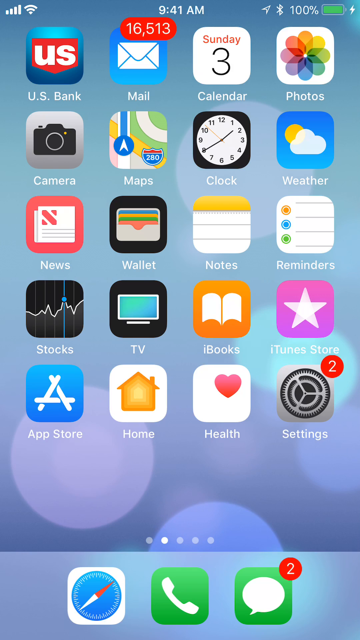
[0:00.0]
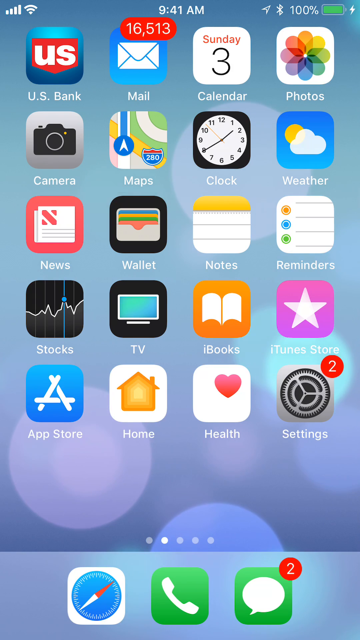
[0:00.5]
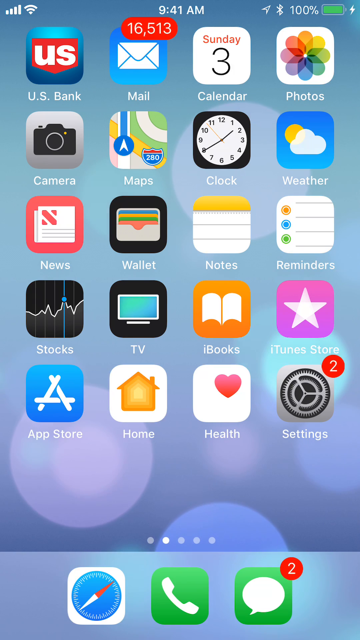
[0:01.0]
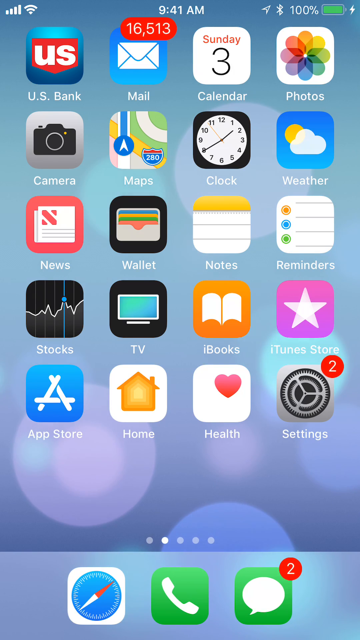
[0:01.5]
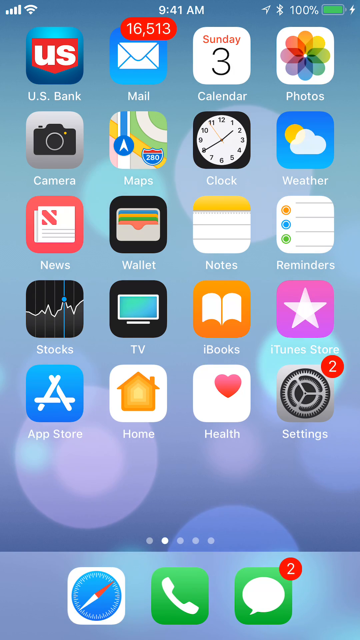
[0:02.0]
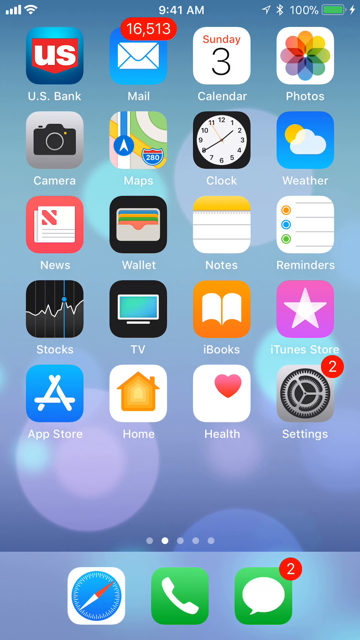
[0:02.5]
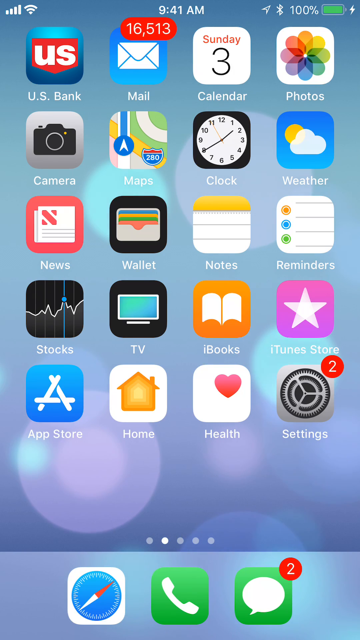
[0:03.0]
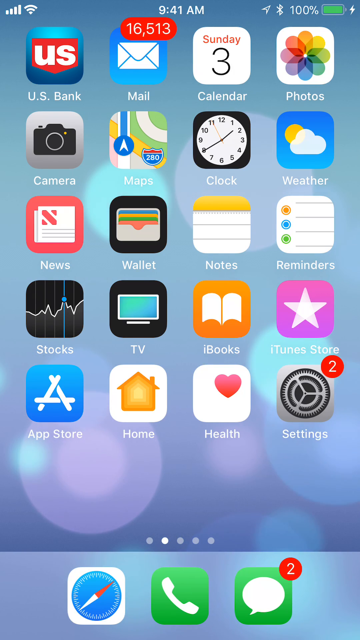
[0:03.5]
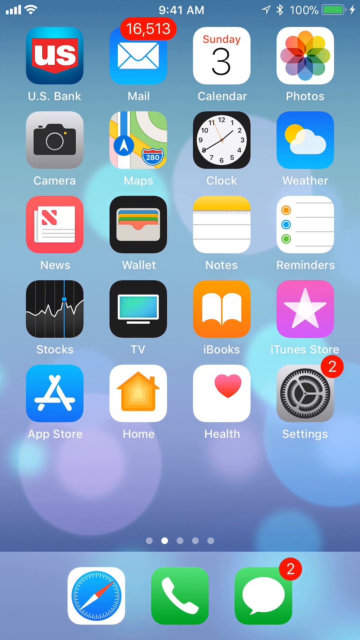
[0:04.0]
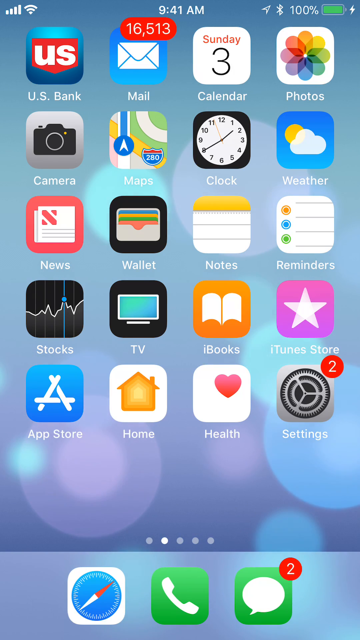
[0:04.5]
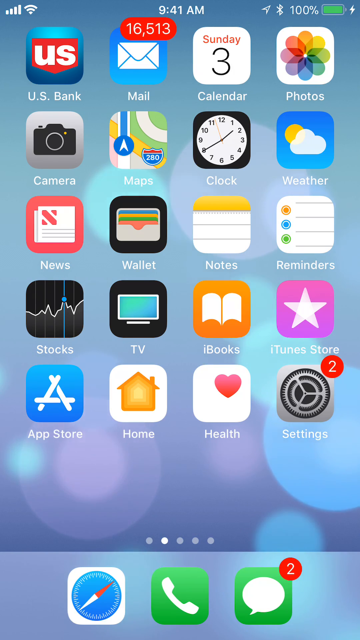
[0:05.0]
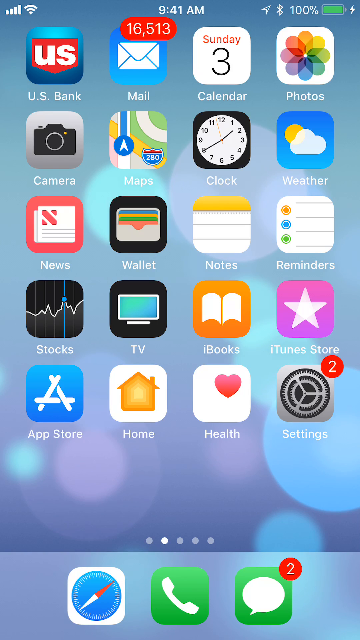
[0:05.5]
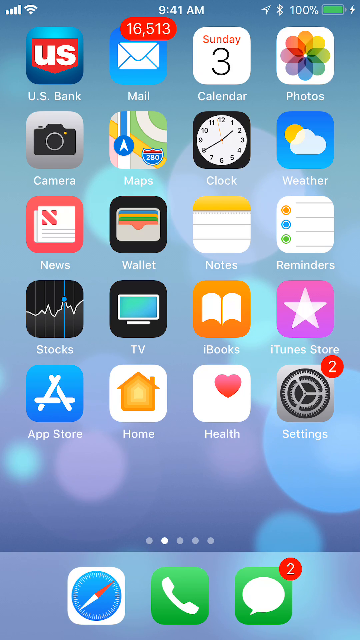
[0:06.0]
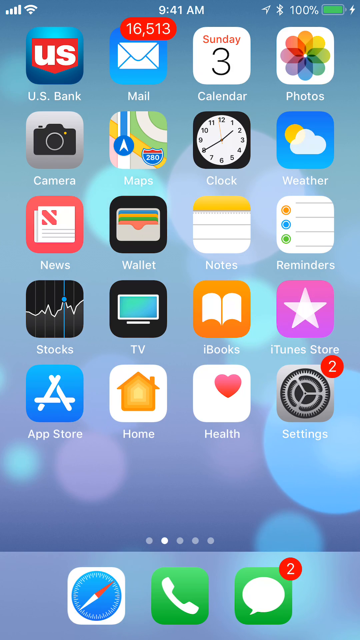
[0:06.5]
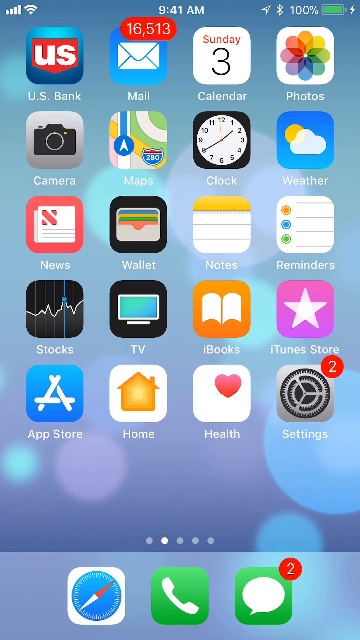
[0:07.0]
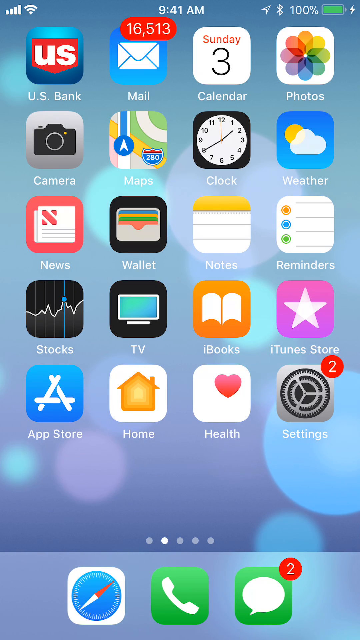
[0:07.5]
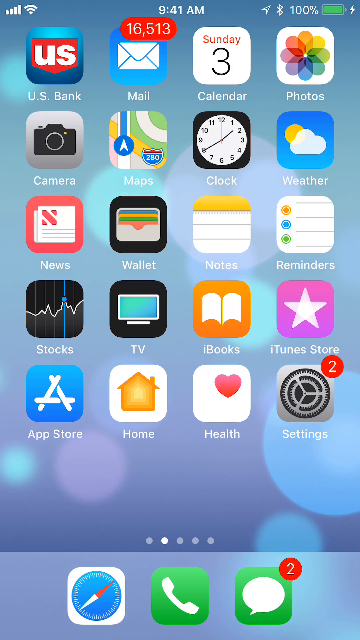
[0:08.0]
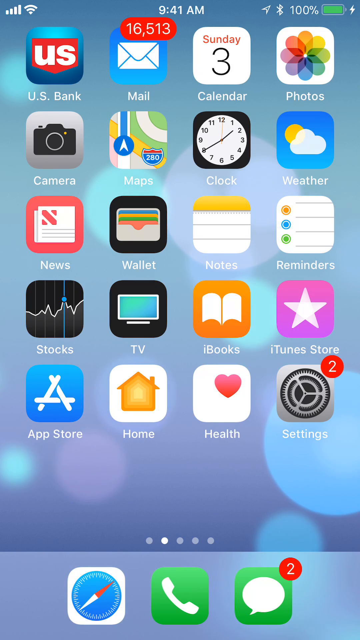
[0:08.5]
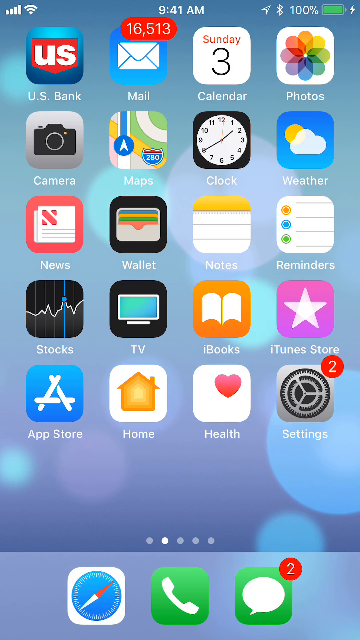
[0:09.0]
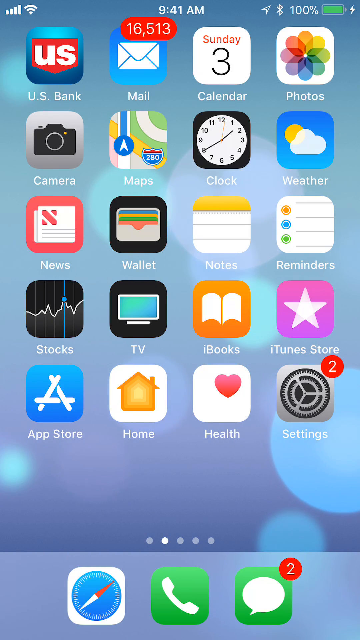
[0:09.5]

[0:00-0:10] A phone video recording, apparently taken on an iPhone, shows the iPhone's home page. Several apps are arranged in four columns and five rows, and at the bottom three apps sit in the taskbar: Safari, Calls, and iMessage. The background is light blue with some sparkly bubbles in the back. The video remains on this home page. The applications include US Bank, Mail, Calendar, Photos, Camera, Maps, Clock, Weather, News, Wallet, Notes, Reminders, Stocks, TV, iBooks, iTunes, Store, App Store, Home, Health, and Settings, each with its accompanying logo.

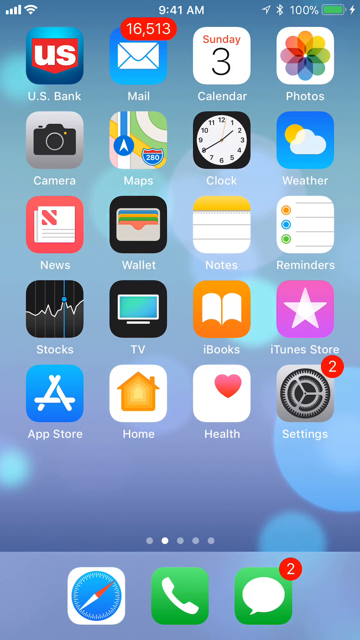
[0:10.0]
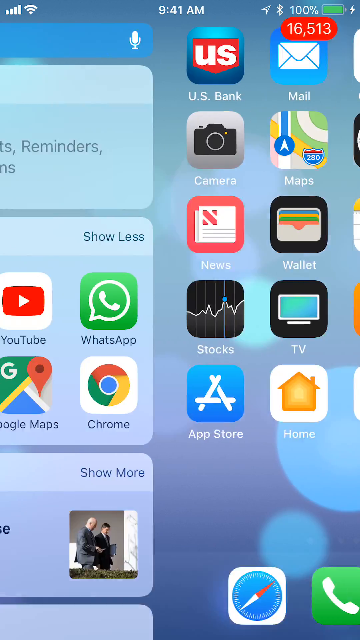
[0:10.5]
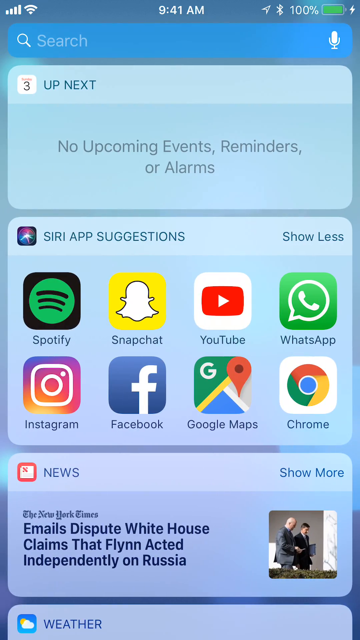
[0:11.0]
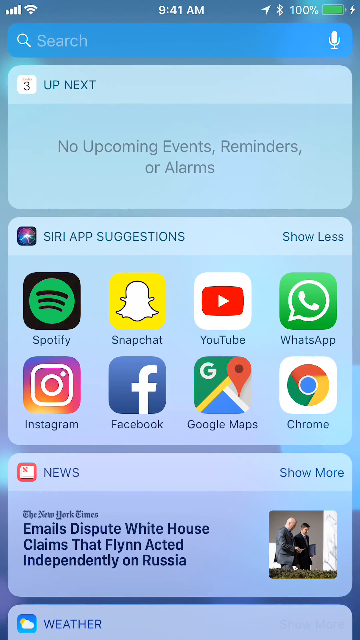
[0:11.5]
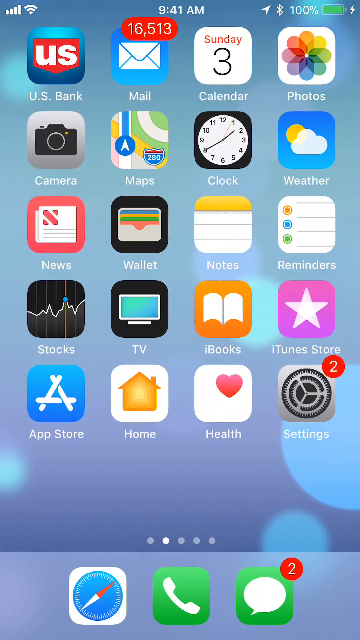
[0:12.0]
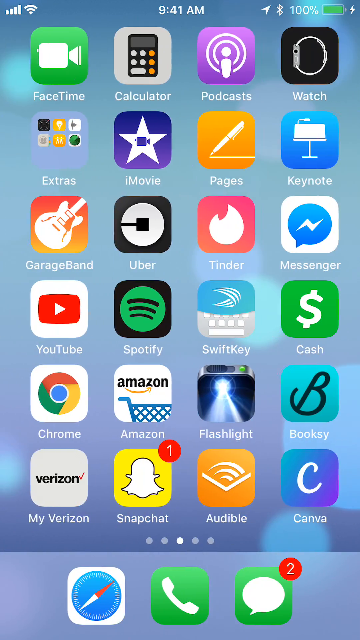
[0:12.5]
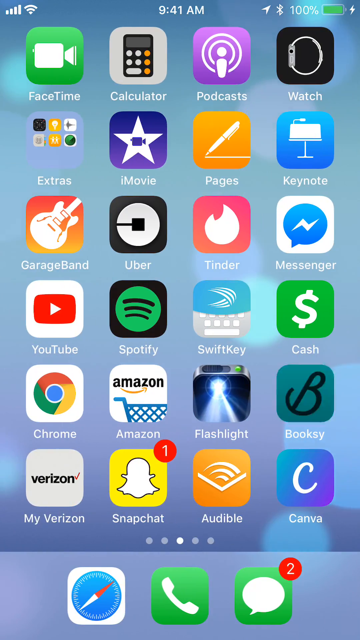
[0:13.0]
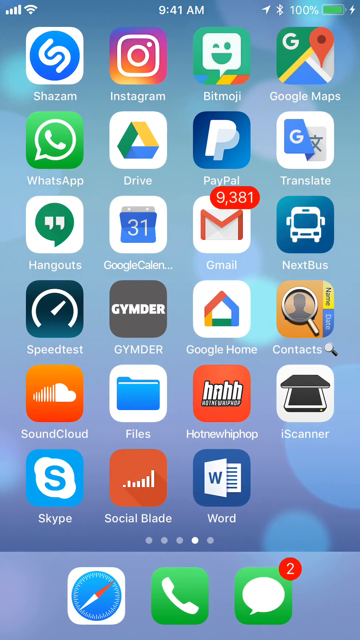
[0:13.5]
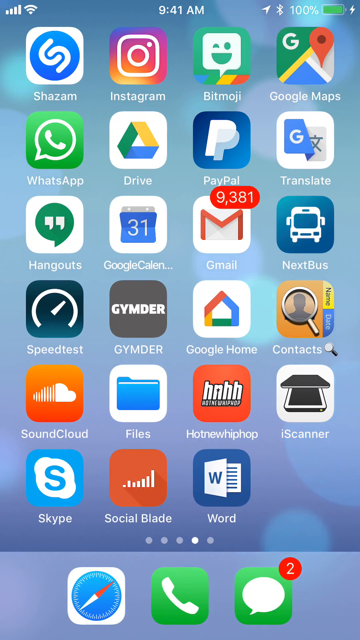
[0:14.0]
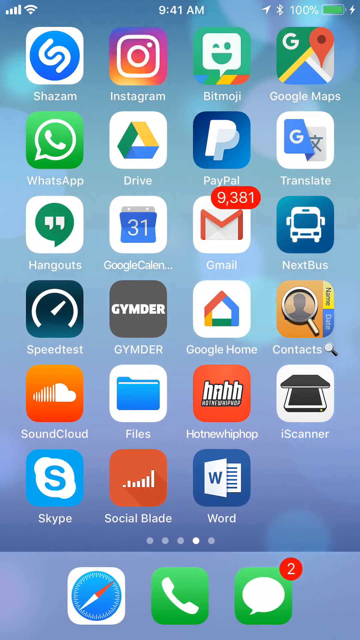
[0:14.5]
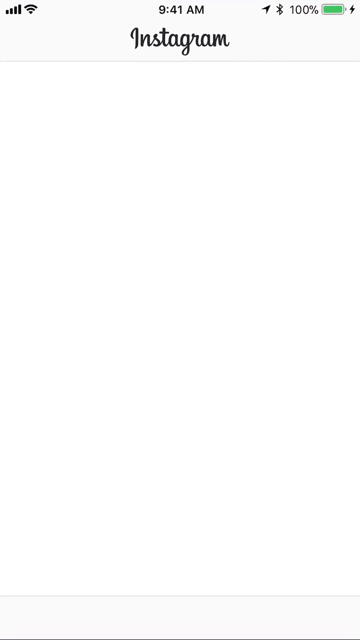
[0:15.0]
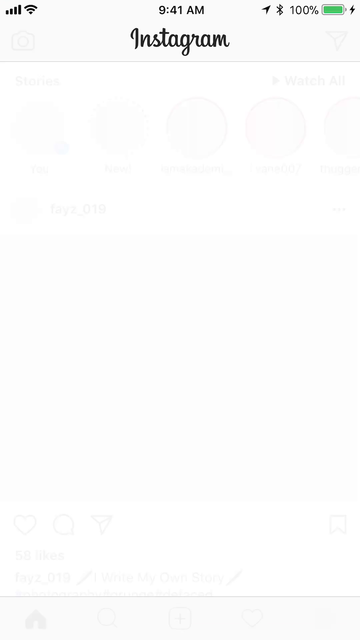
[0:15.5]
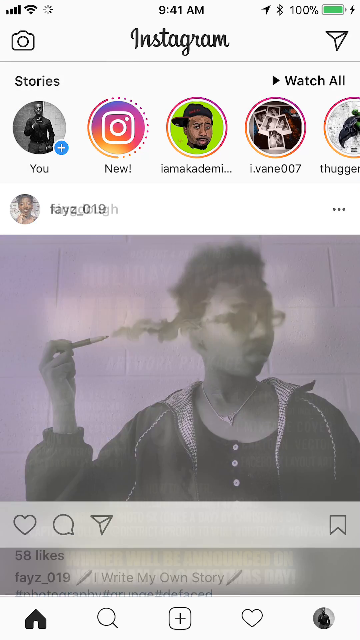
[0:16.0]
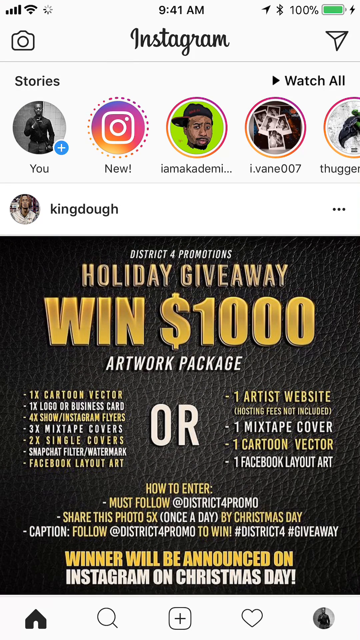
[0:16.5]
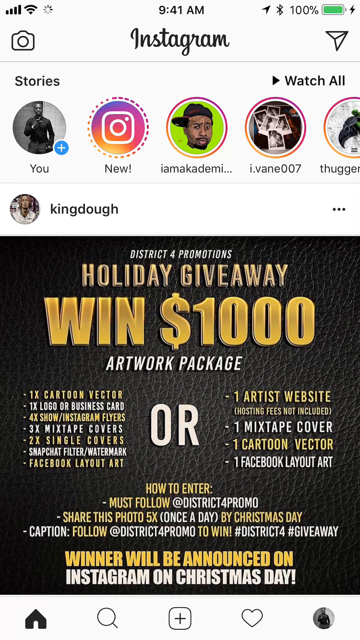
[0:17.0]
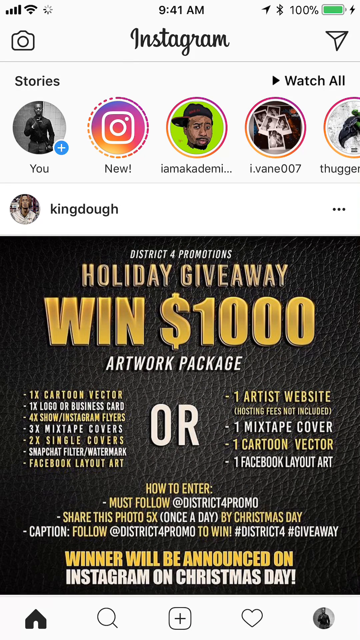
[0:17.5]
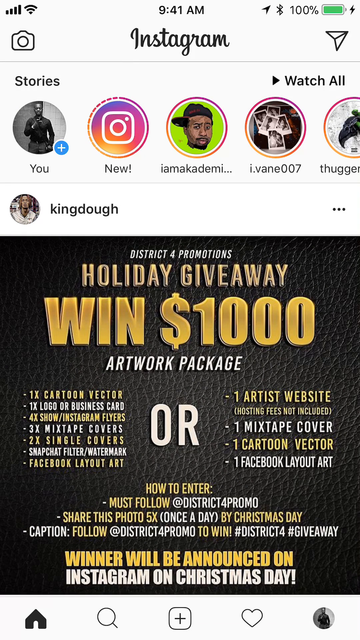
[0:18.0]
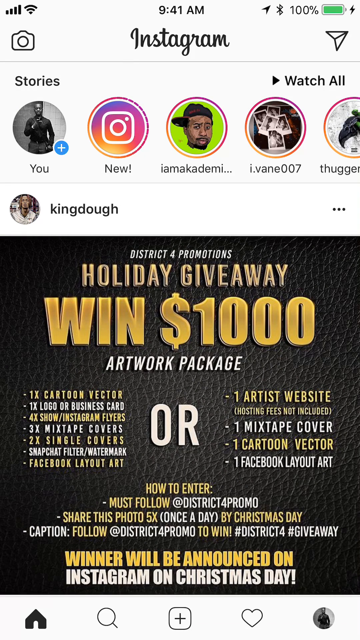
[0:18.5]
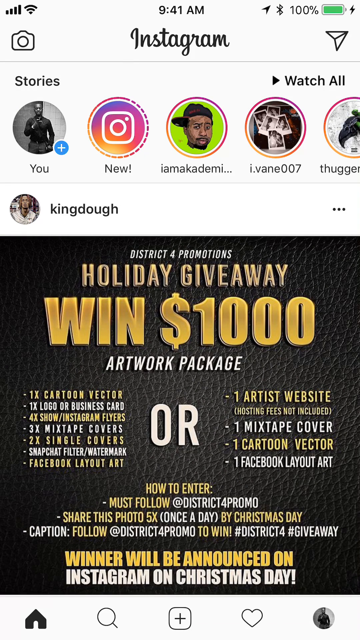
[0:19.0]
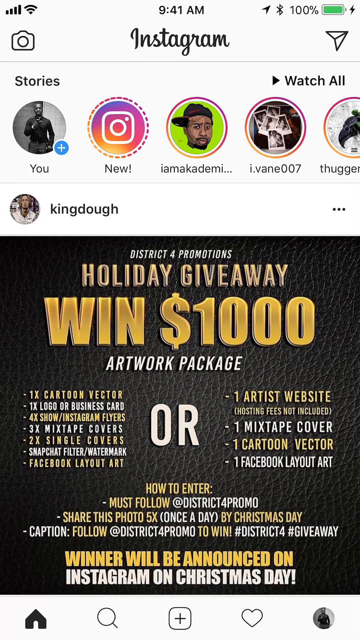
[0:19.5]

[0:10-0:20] The video is still on the iPhone home page showing the applications. The phone swipes over to the left, revealing a search bar at the top and a calendar with upcoming events, of which there are none. Underneath is a panel that says "Siri app suggestions" listing Spotify, Snapchat, YouTube, WhatsApp, Instagram, Facebook, Google Maps, and Chrome with their icons. Below that is news. Each of these panels has a light blue background. The phone then swipes two times to the right, showing a different page of apps, and once more to the right to the fourth page of apps, where he taps the Instagram app at the top of the screen. The main Instagram page opens, showing stories at the top and someone's post at the bottom from Kingdo about a holiday giveaway.